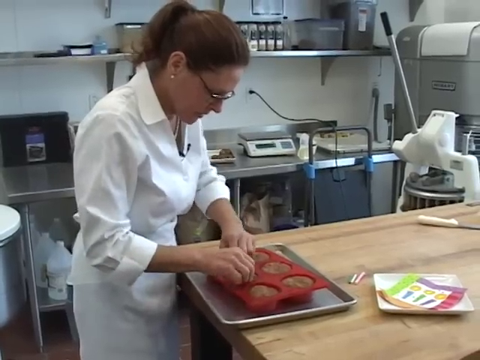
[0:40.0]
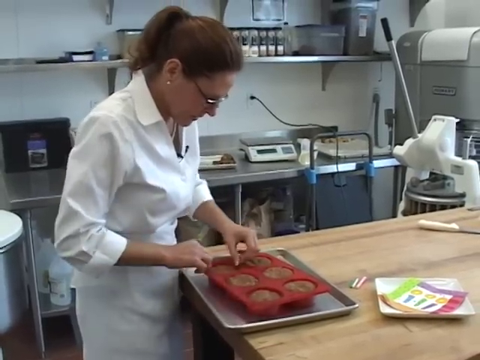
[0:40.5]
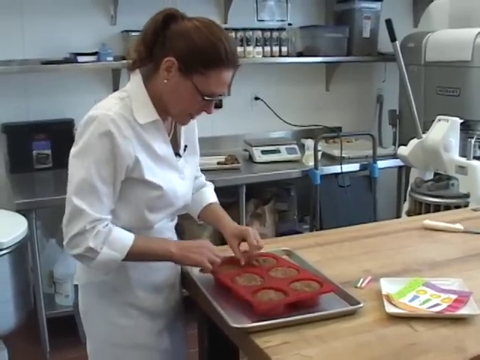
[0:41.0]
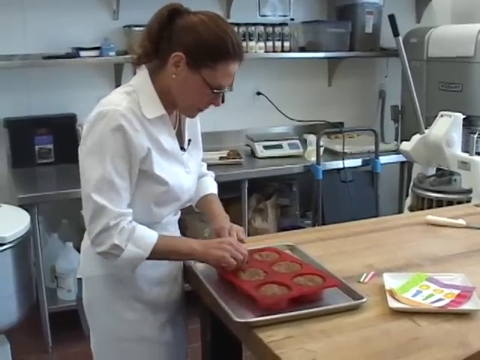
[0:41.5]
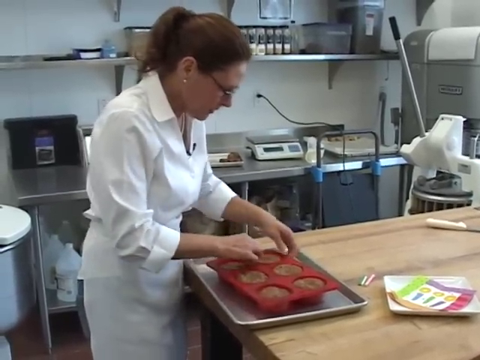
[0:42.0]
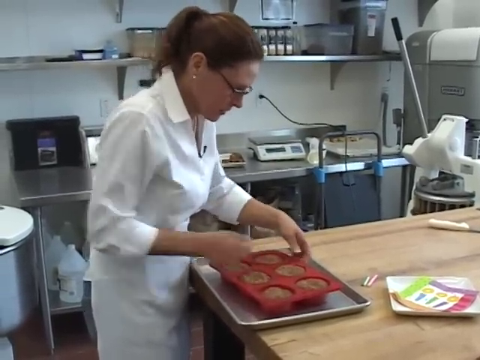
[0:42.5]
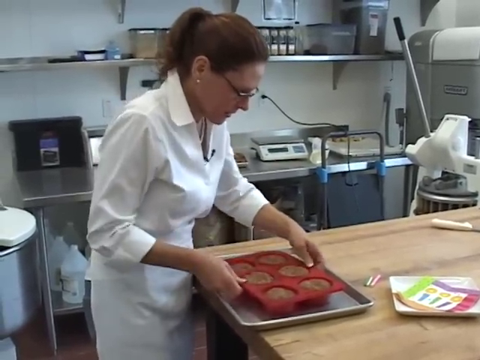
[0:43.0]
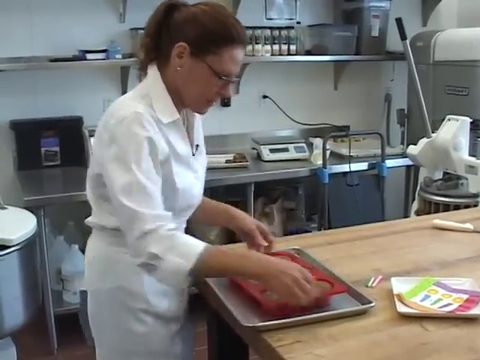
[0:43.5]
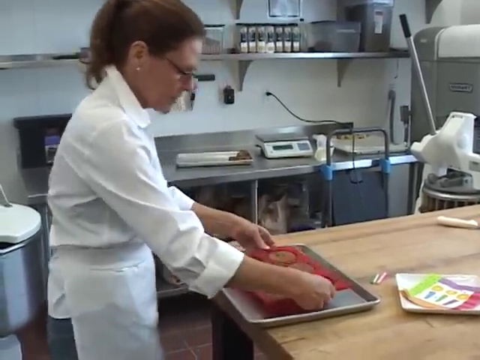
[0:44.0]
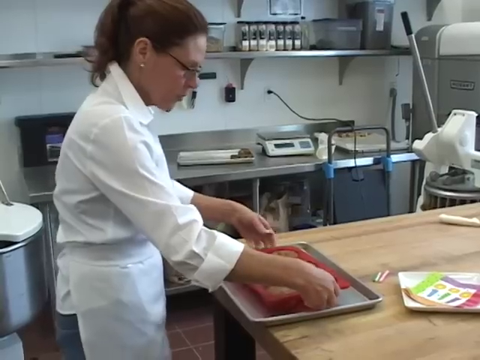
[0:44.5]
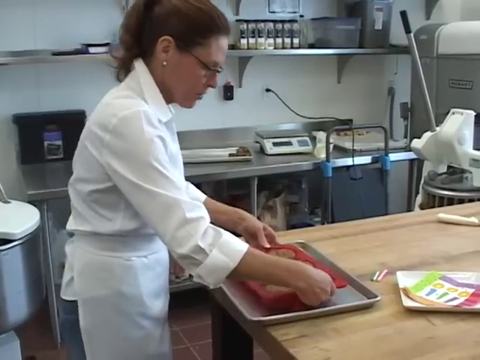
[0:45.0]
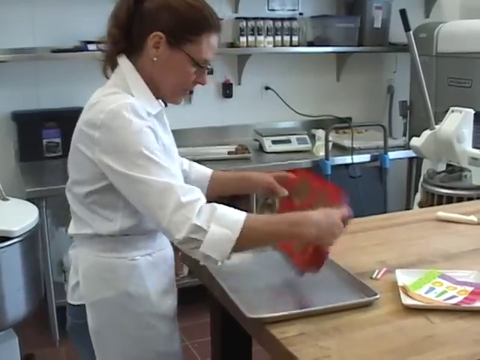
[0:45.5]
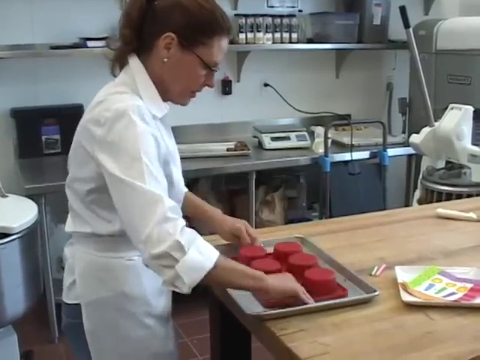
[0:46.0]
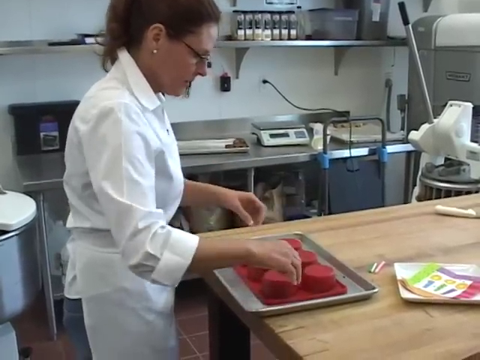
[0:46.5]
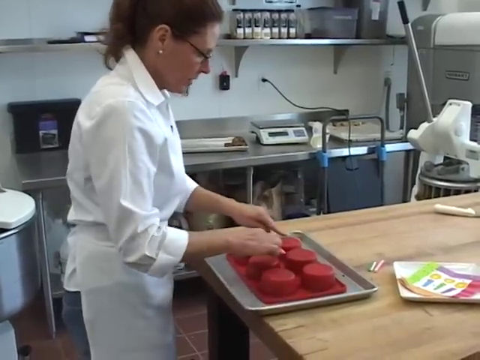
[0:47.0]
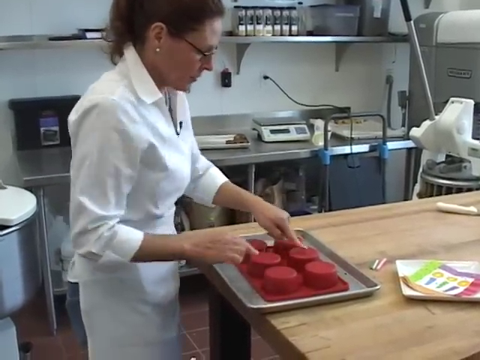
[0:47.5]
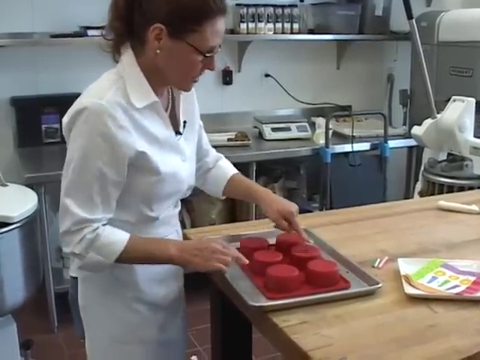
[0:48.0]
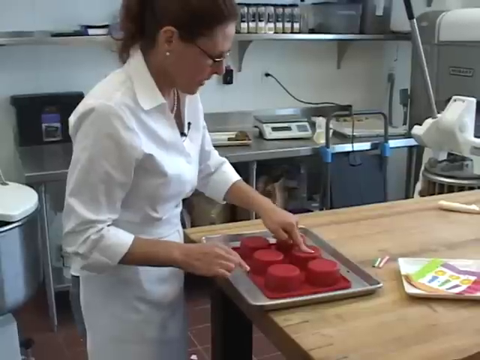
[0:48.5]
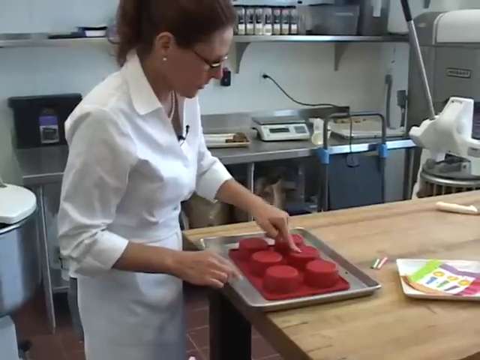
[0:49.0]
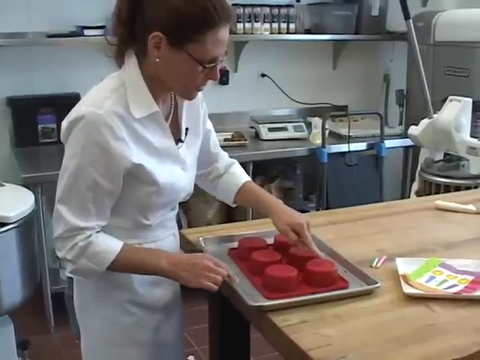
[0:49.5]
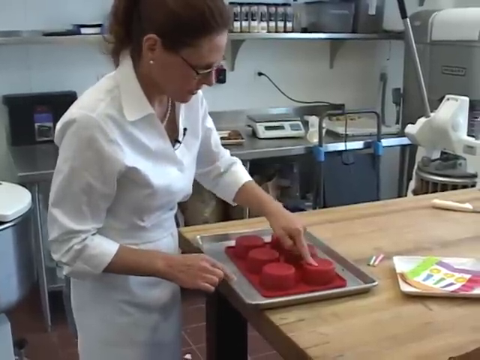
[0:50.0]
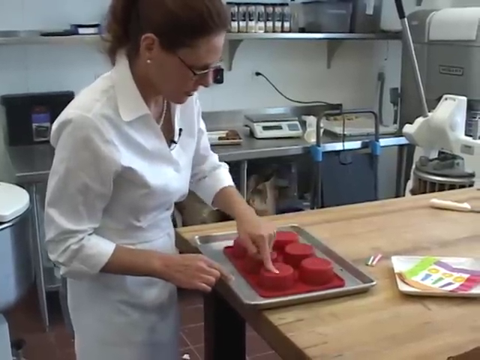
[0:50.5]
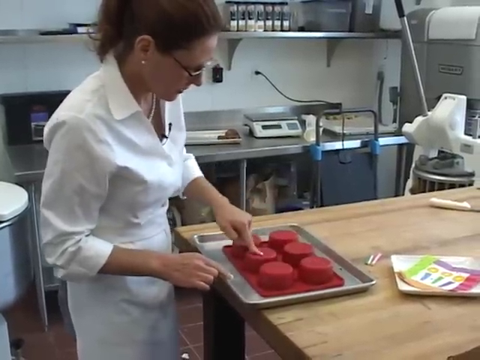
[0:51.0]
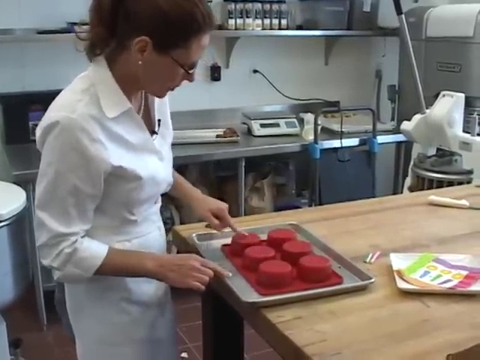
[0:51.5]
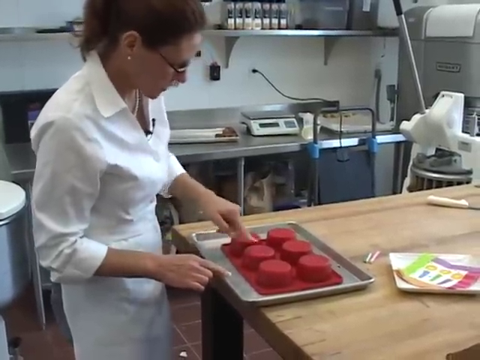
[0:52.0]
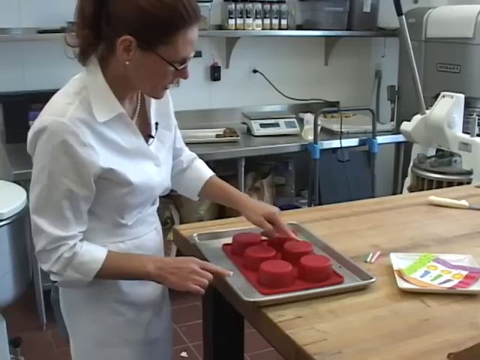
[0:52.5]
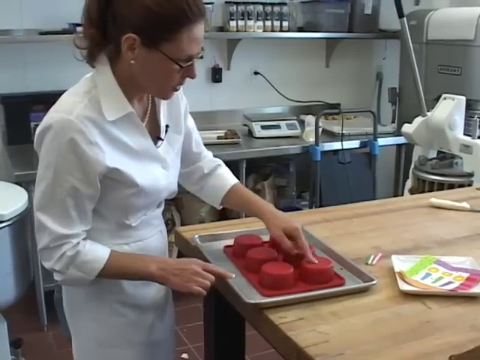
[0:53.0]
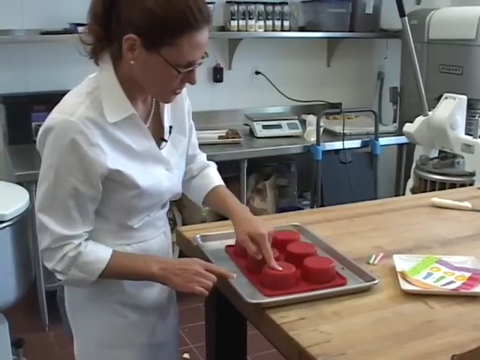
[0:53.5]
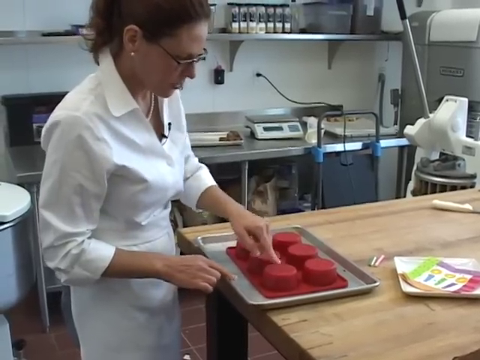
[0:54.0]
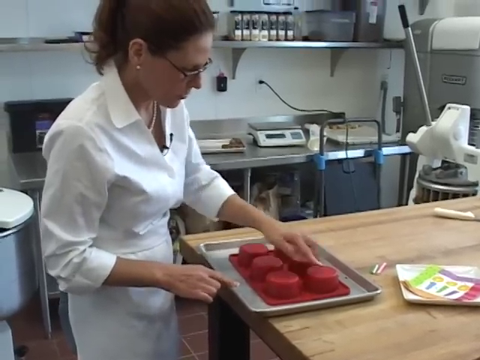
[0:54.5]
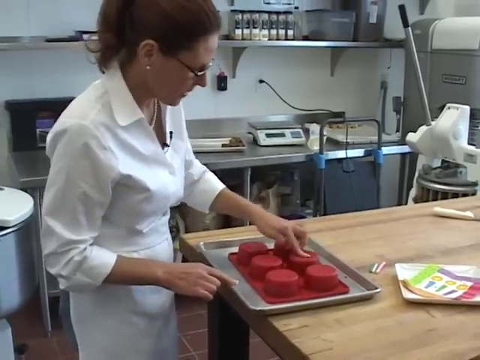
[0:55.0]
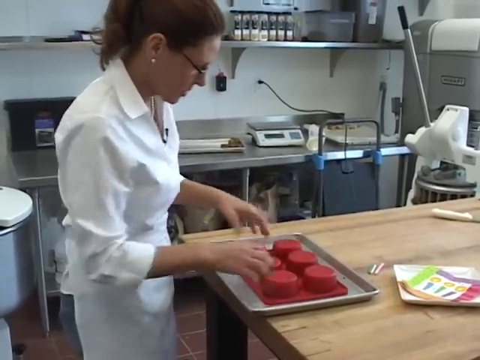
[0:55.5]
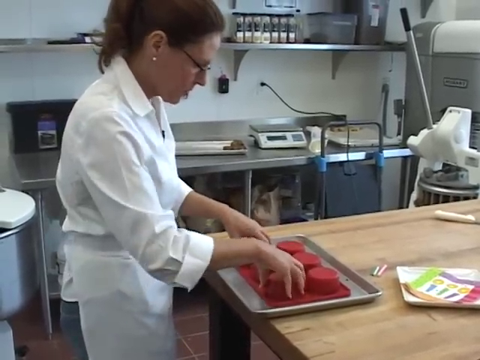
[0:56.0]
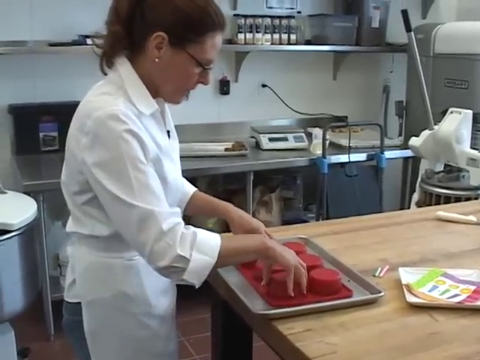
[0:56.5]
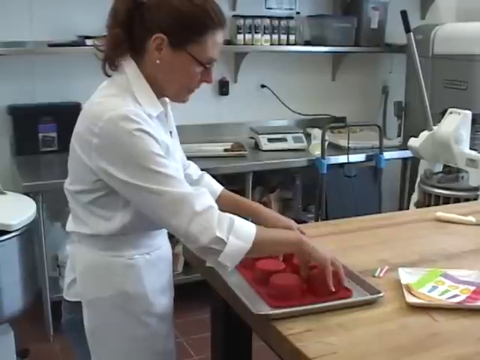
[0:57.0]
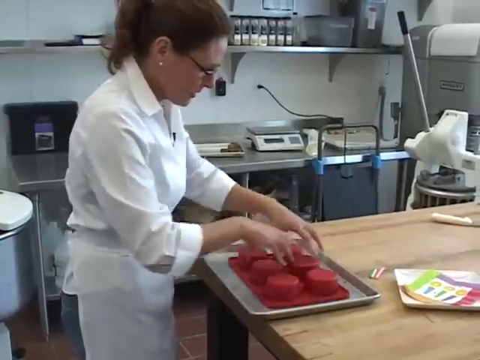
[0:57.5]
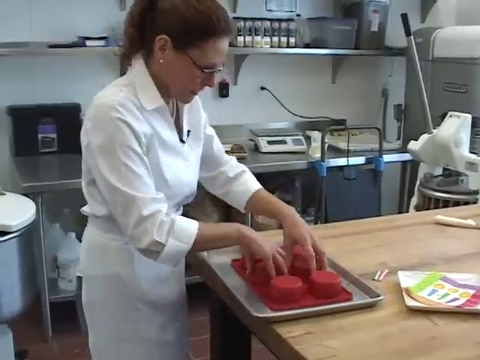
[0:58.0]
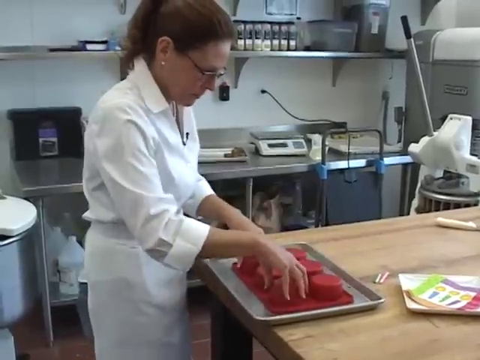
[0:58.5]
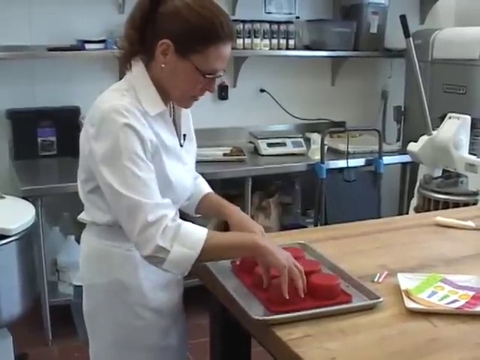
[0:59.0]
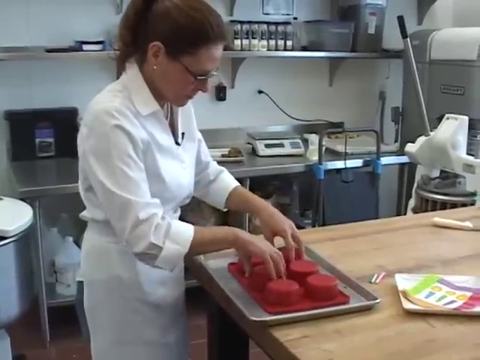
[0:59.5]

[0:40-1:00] The woman in the clean white outfit is still working in her kitchen, standing in front of the red pan with muffins in it. She pokes each muffin and stretches the red container, then turns it upside down. With it upside down, she goes around pressing down on each point so nothing is left in the edges of the container, pressing each of the six muffins held in it. She then pulls the muffins out neatly.